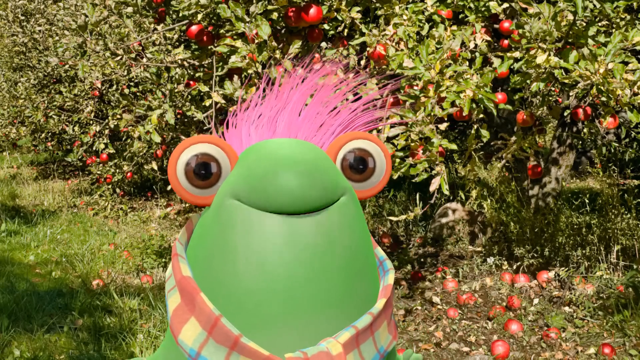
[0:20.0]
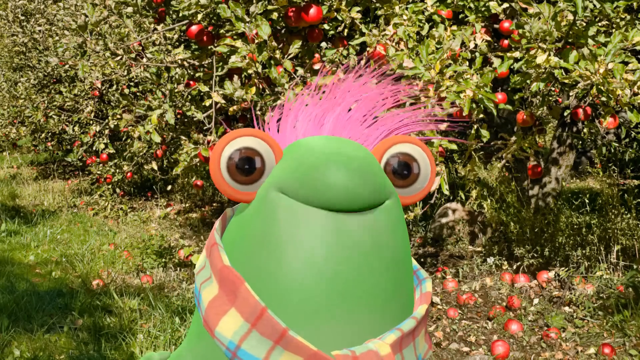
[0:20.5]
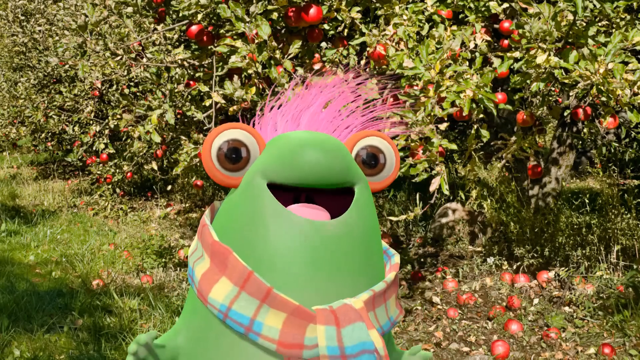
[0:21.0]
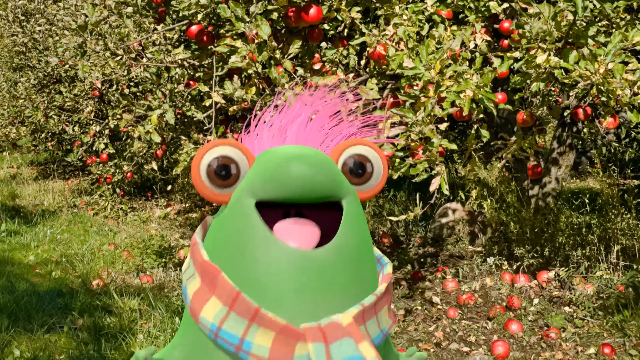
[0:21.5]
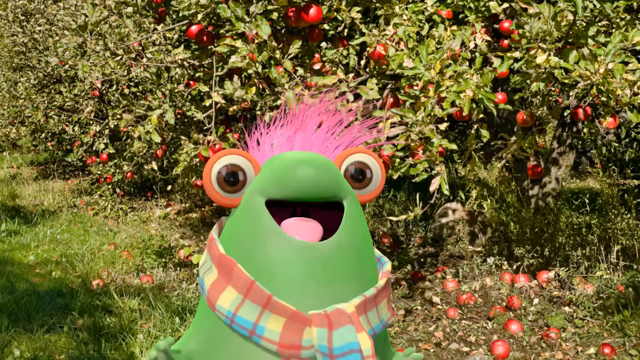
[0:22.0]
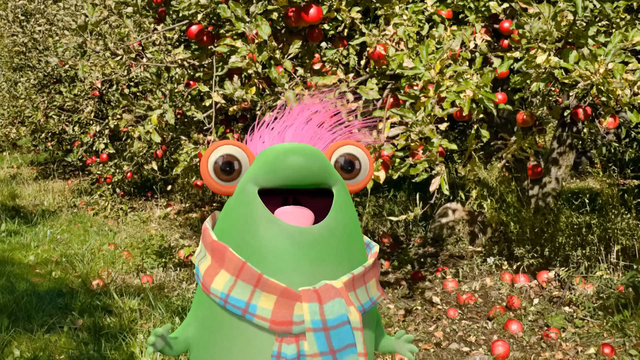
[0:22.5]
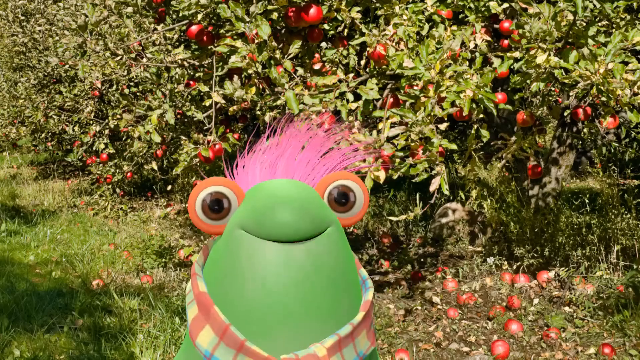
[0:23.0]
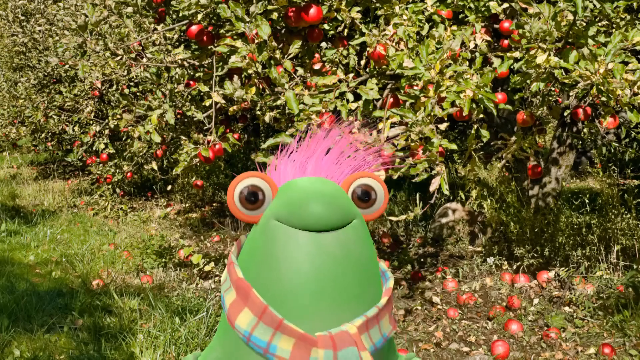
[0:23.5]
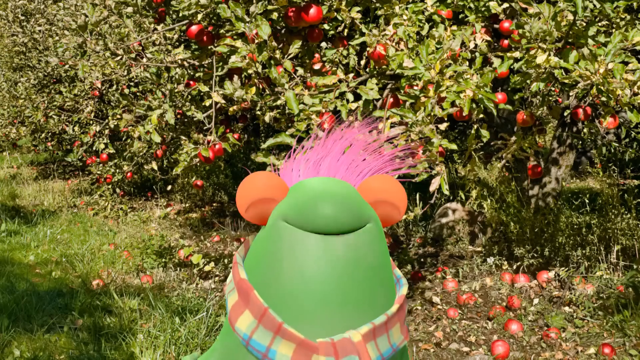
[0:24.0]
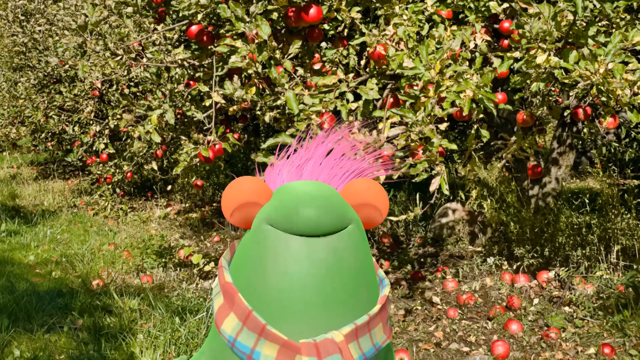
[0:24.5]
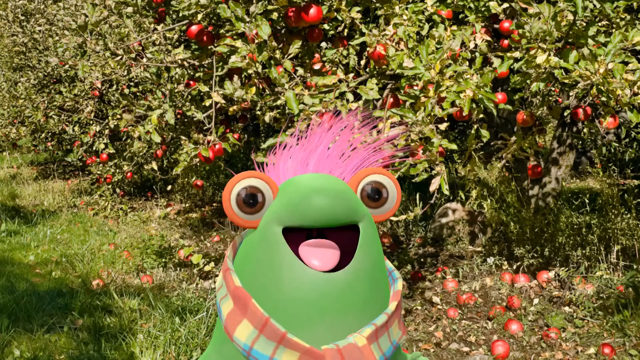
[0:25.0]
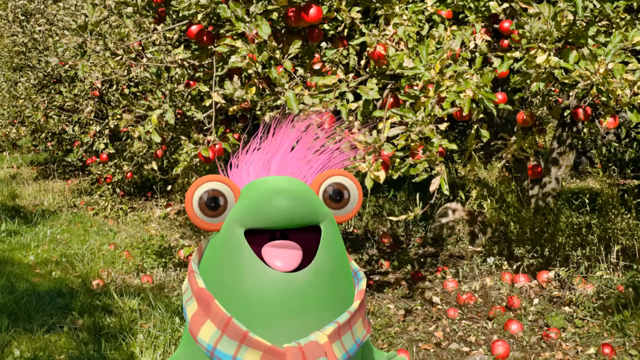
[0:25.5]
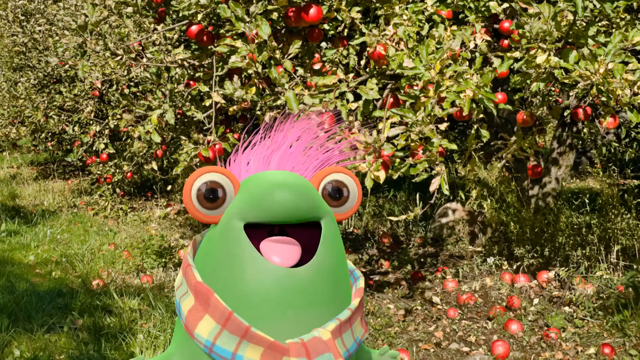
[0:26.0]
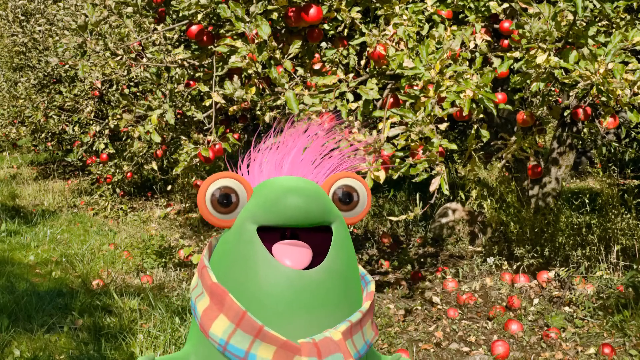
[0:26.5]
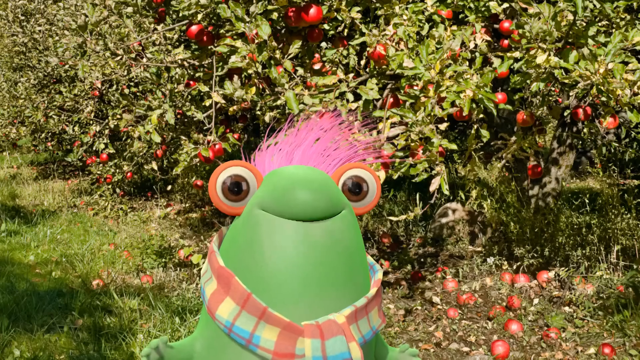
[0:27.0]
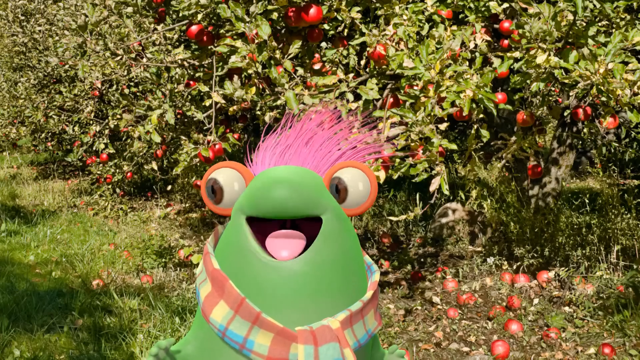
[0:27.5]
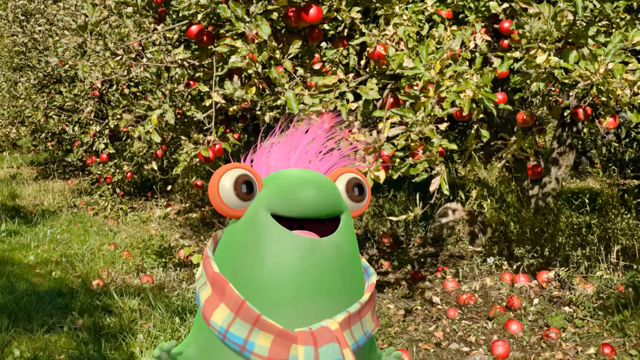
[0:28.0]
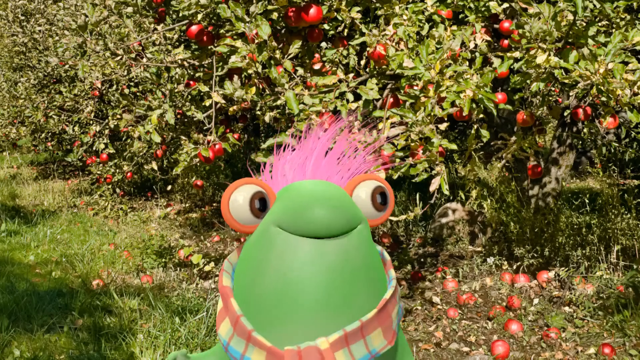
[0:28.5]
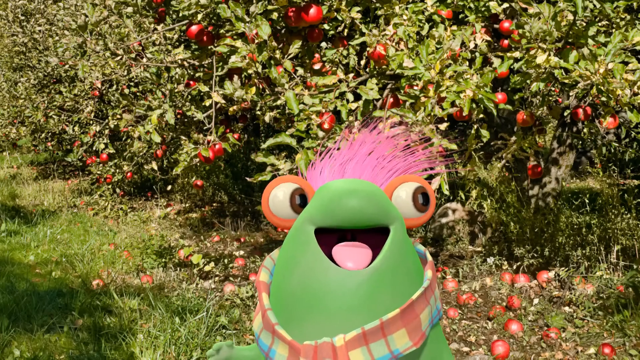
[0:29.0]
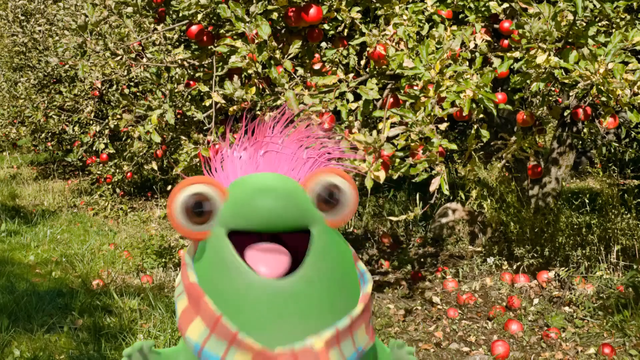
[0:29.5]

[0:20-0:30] The green character wears a multicolored orange and blue plaid outfit that looks somewhat like a scarf. He has pink spiky hair, and his eyes are orange around the rim while the eyes themselves are brown. He talks in a very happy, enthusiastic way, wobbling around and shaking his head while repeatedly blinking, with his arms held somewhat outward. He looks toward his left as if looking at something, his eyes light up, and he starts shaking again, continuing to talk while pushing his head forward toward the camera and back. He then looks to his left and right as if still looking at someone, still talking enthusiastically. In the background there are apples on the ground, green bushes, and some shadows. He is possibly in a field somewhere. The ground appears to show slight drought, as some of the grass looks dead.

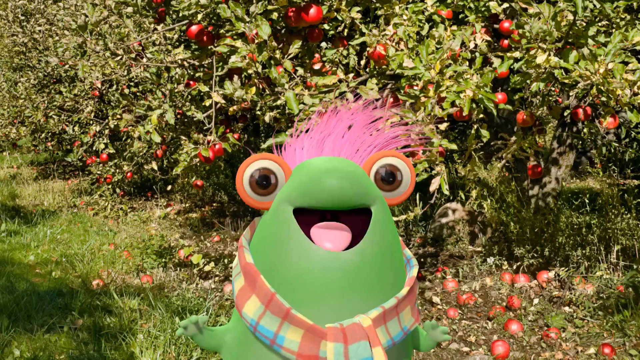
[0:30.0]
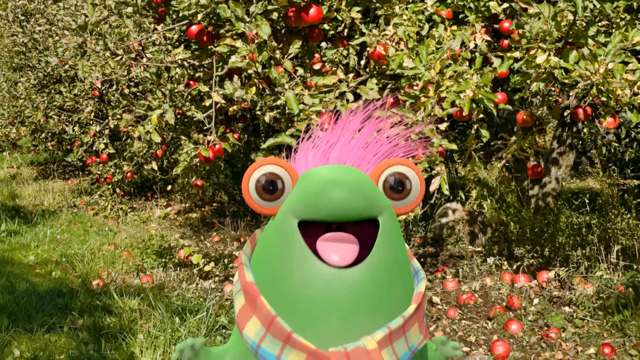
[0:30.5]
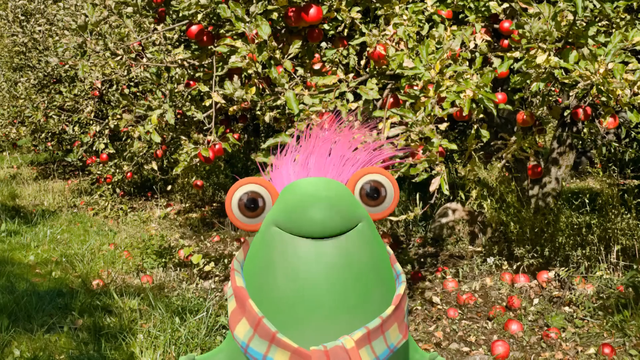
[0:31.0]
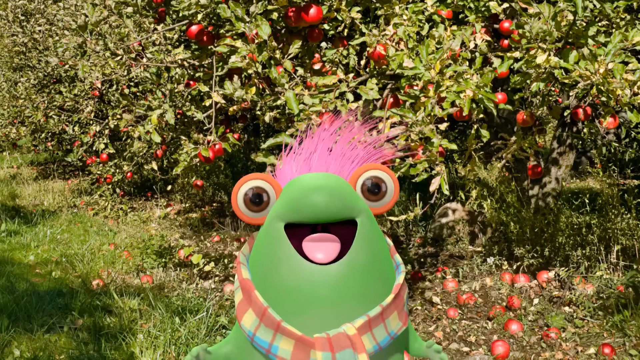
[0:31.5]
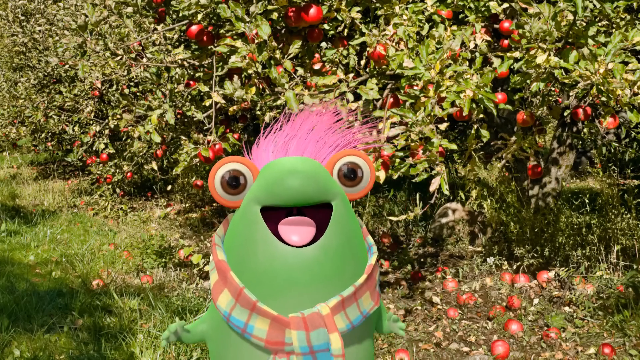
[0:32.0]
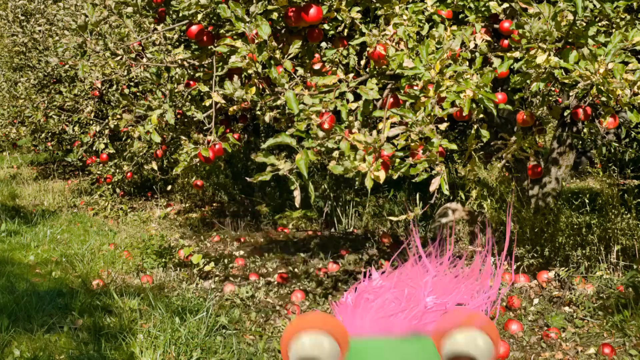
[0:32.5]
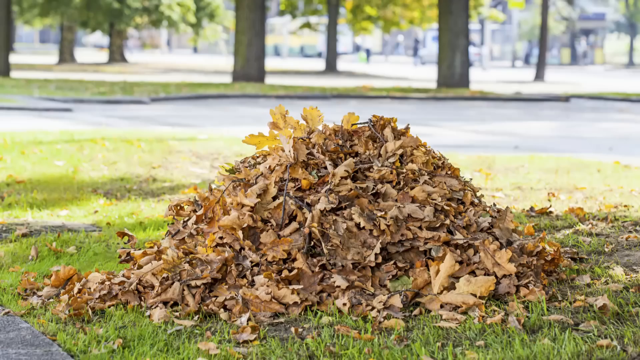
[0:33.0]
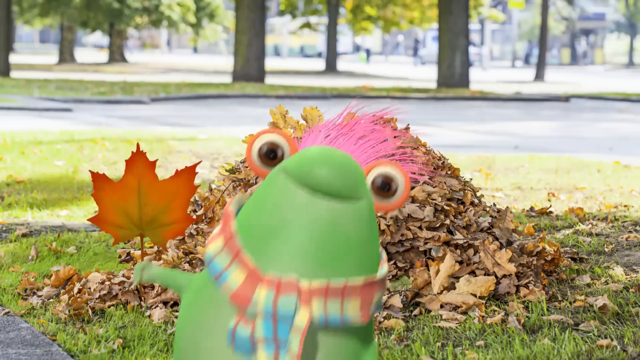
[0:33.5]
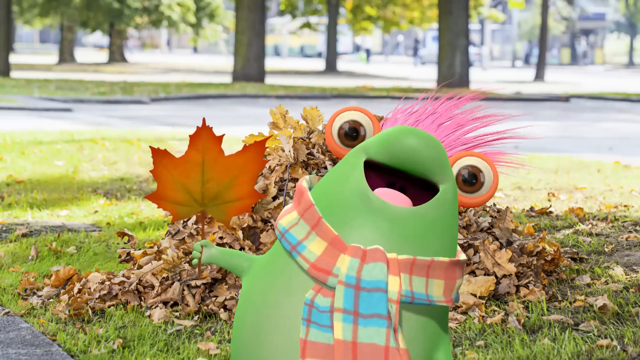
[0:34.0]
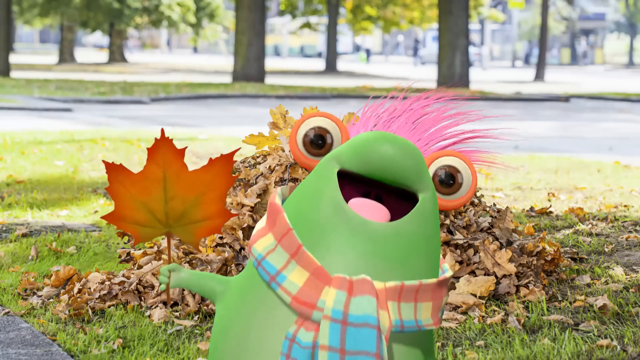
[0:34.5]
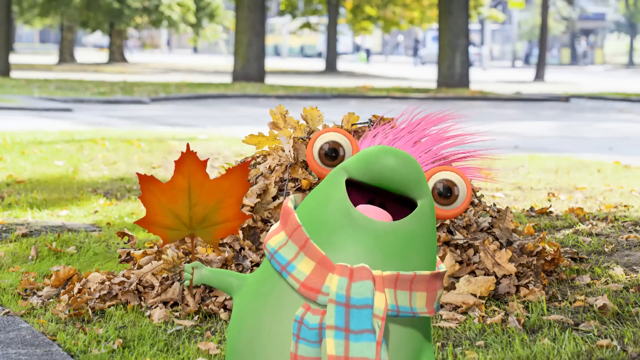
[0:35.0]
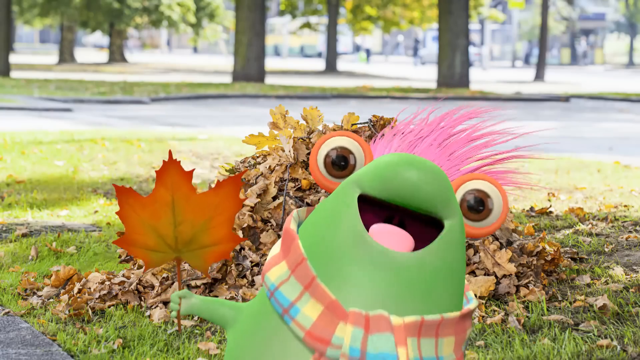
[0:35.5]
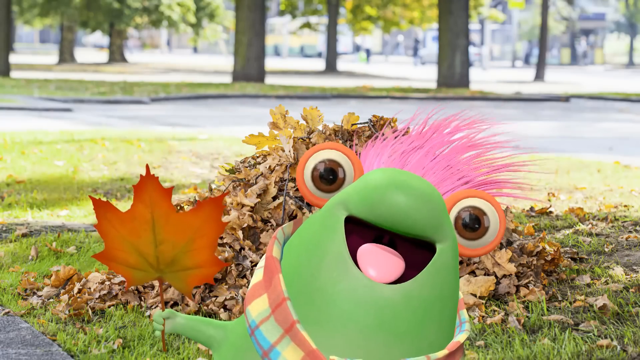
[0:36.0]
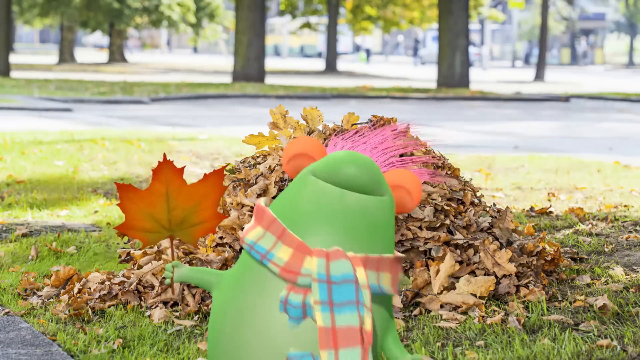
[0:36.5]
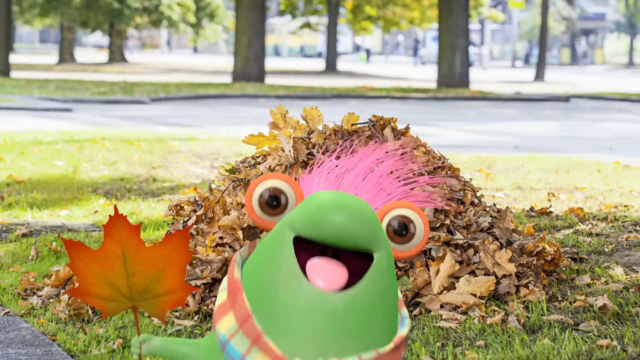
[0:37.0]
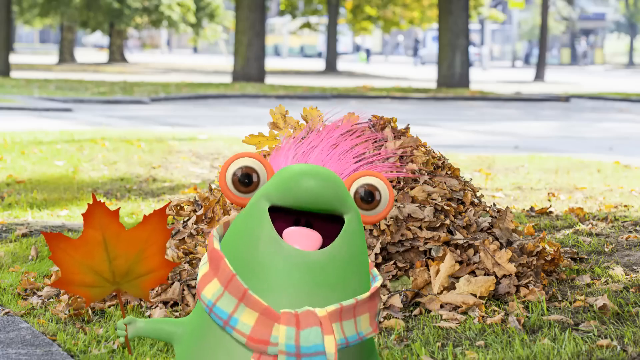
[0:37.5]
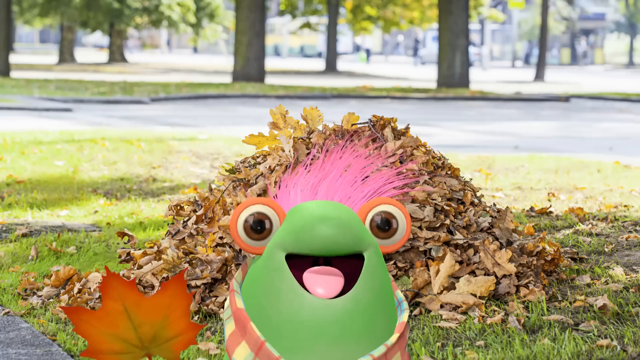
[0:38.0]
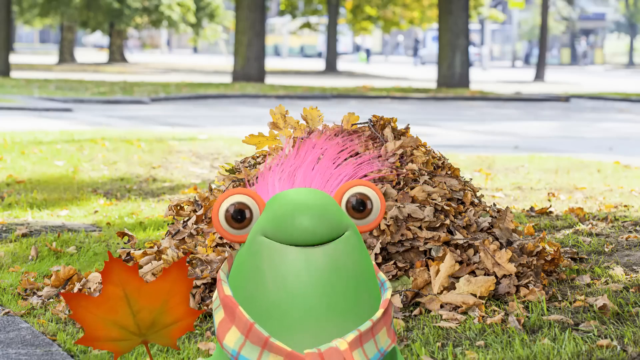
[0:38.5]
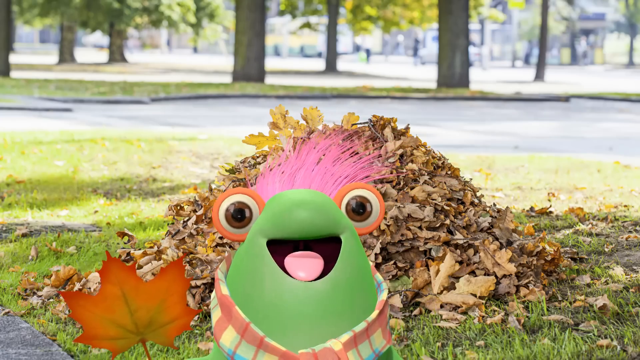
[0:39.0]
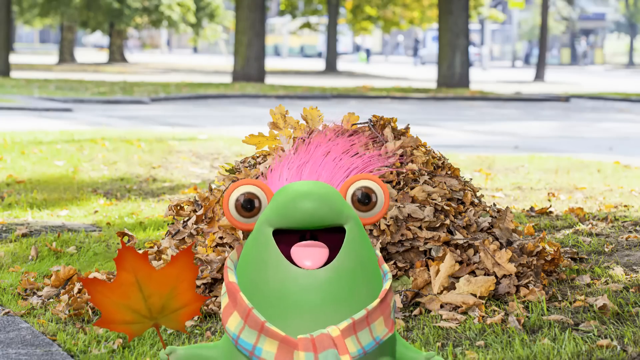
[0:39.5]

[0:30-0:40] The green character has orange-rimmed eyes with very large brown eyes, wears an orange and blue plaid scarf, and has pink scruffy hair. He is standing outside in what looks like it could be a field or a yard. A variety of bushes in the background have what looks to be either oranges or apples: on the bushes there appear to be oranges, while the ground seems to have apples everywhere. There seems to be some drought, and there are shadows in the background on the left side. The character is smiling and looks happy. The scene then changes: he is in front of a pile of leaves, holding up an orange leaf in his hand and looking at the camera while he continues to talk, moving his body back and forth and blinking a lot. The leaves are brown and slightly yellow. In the background there are a variety of trees, and what looks to be a parking lot and a road in the distance, along with some shadows.